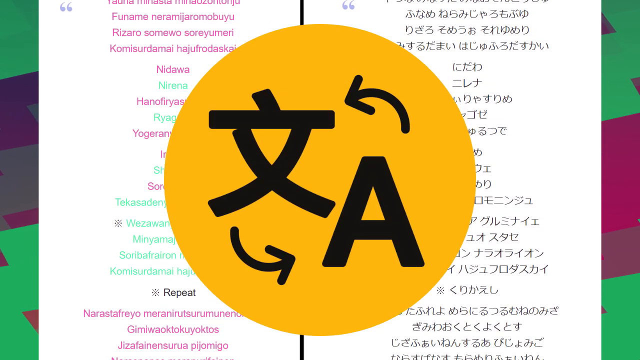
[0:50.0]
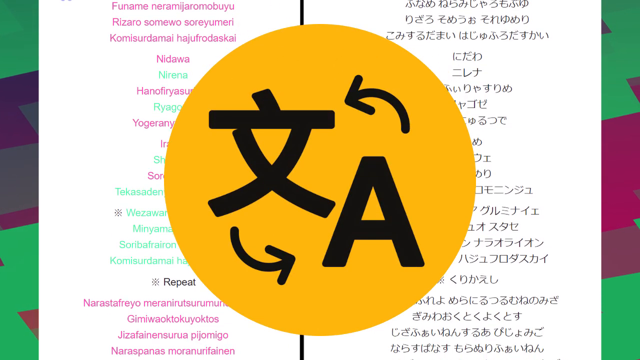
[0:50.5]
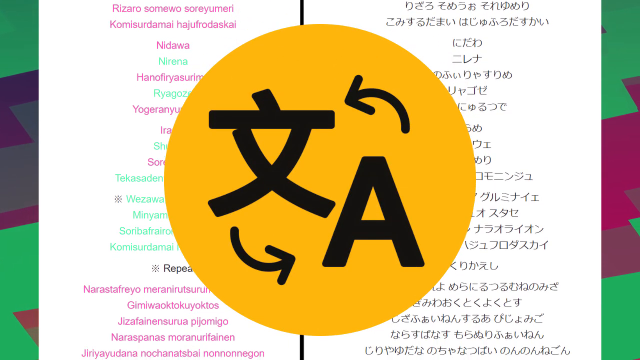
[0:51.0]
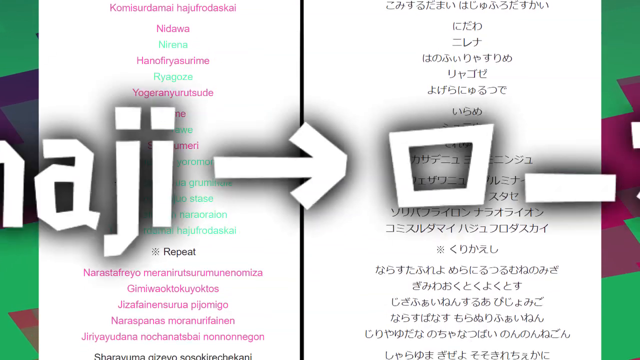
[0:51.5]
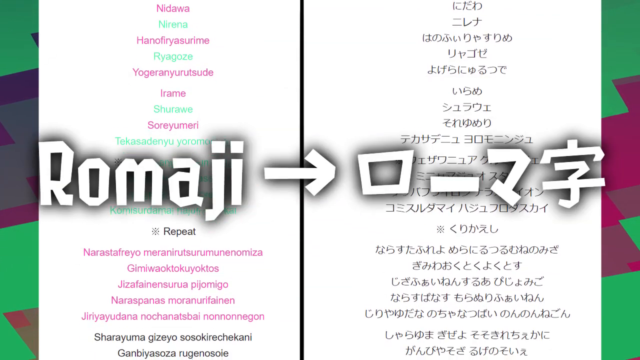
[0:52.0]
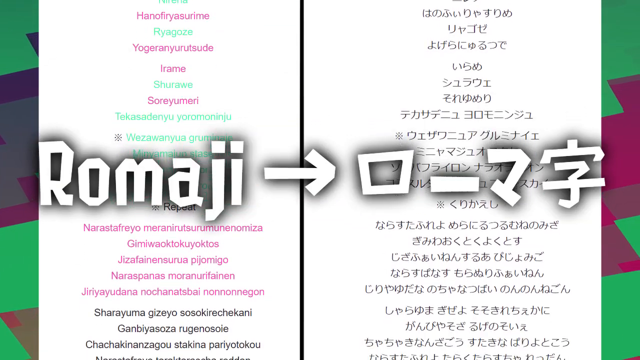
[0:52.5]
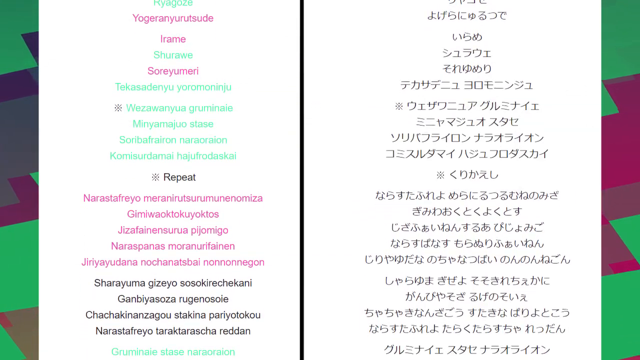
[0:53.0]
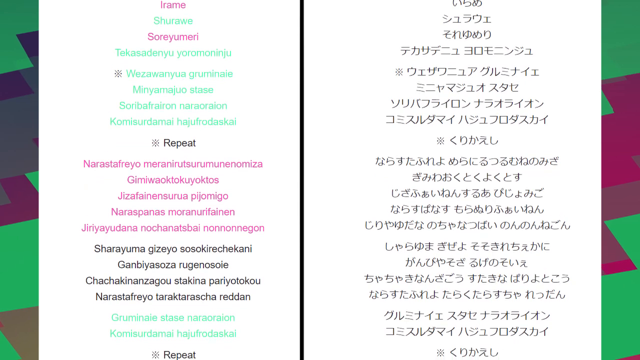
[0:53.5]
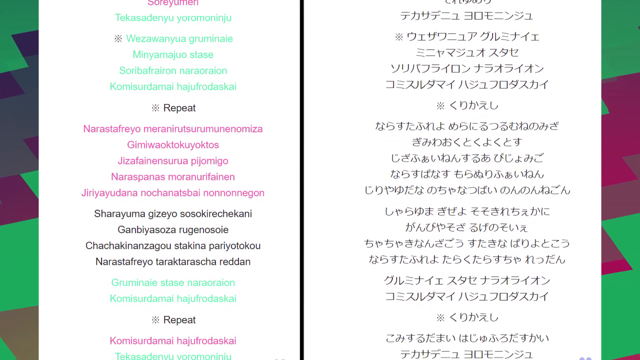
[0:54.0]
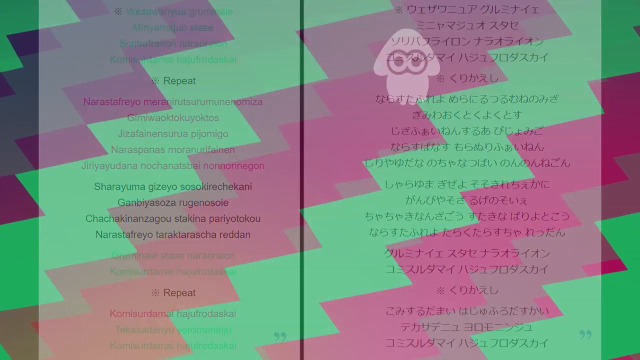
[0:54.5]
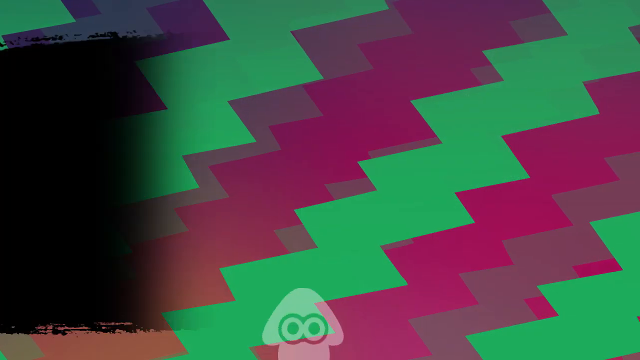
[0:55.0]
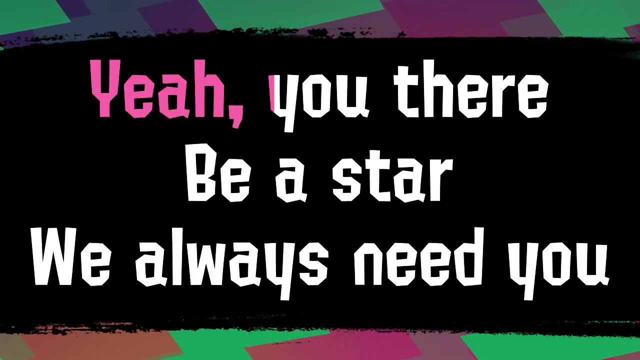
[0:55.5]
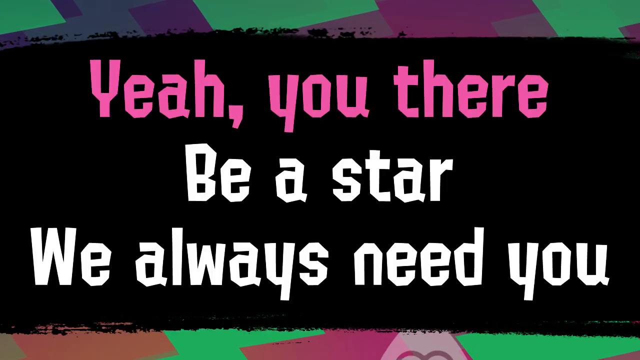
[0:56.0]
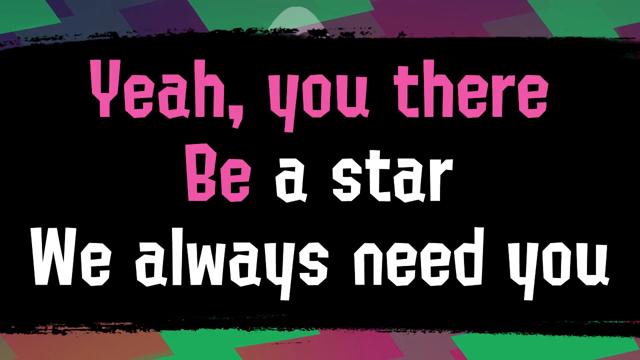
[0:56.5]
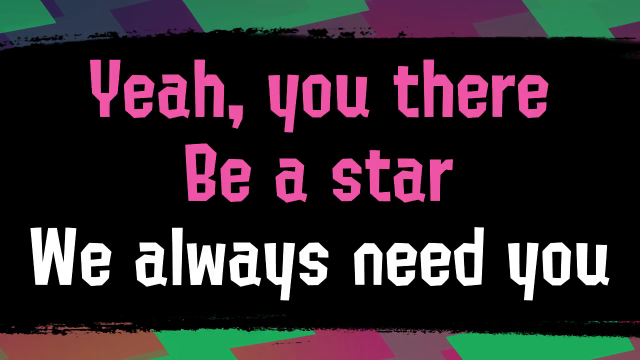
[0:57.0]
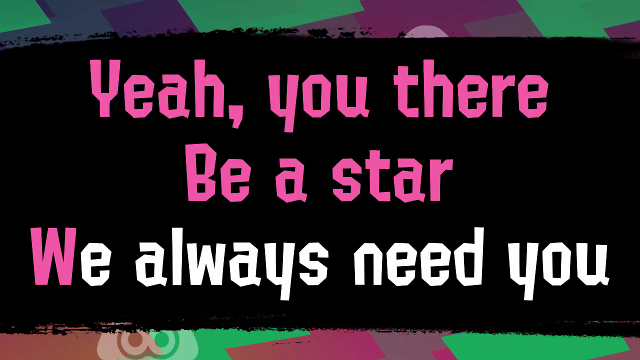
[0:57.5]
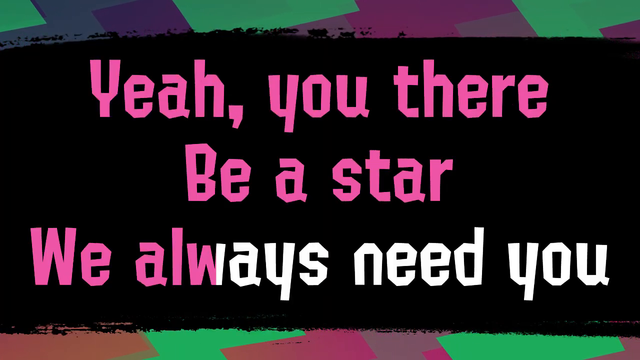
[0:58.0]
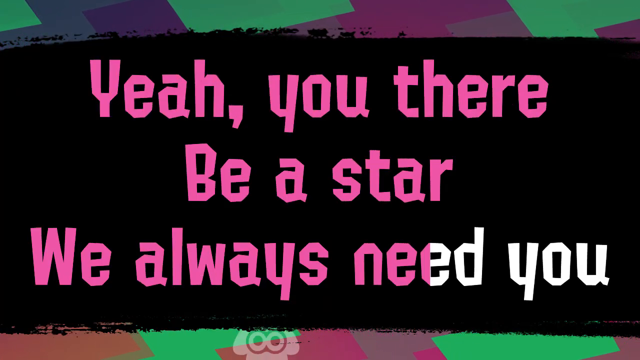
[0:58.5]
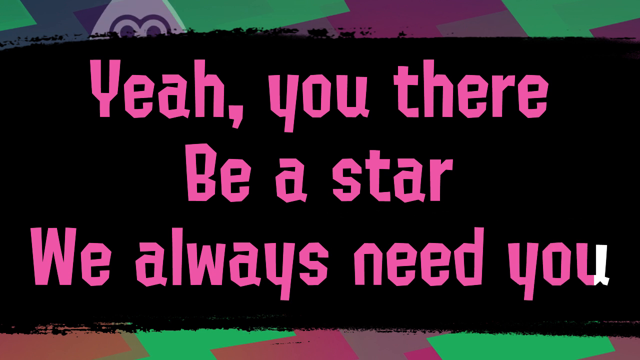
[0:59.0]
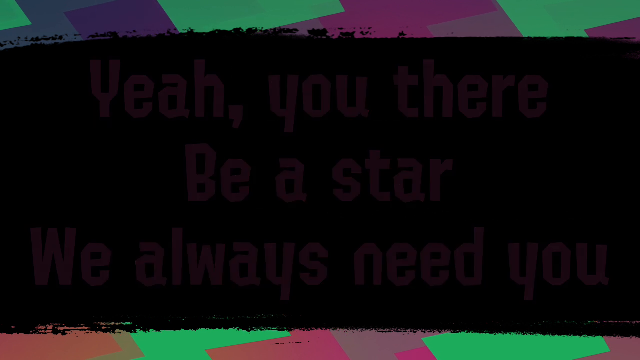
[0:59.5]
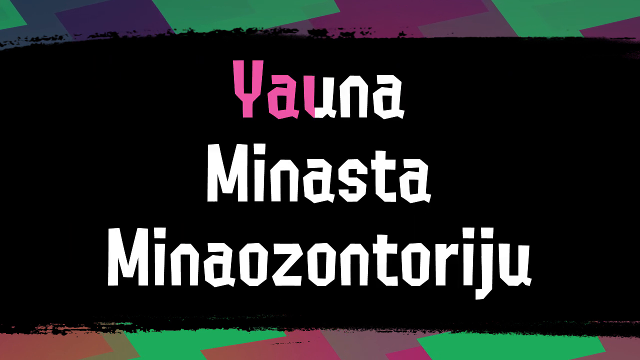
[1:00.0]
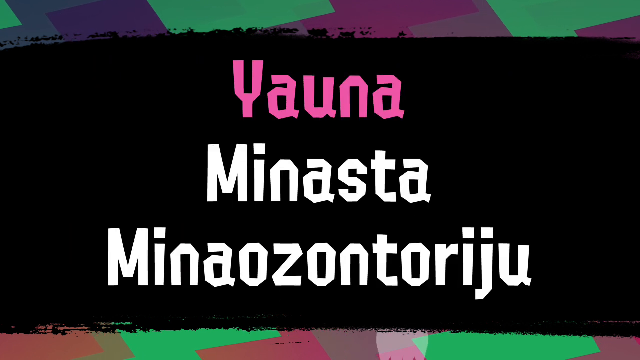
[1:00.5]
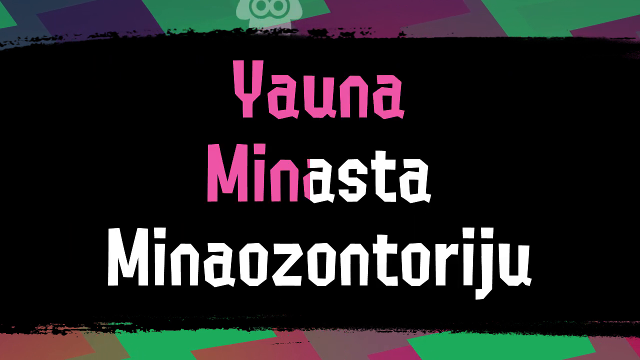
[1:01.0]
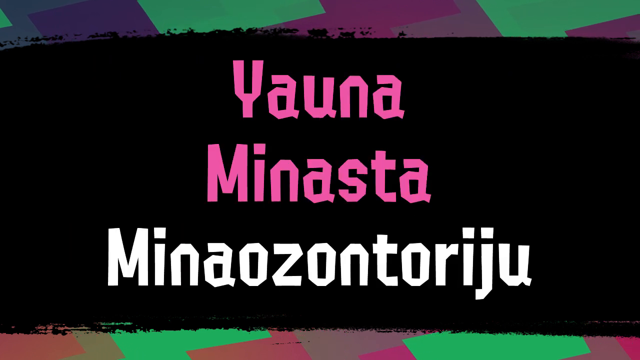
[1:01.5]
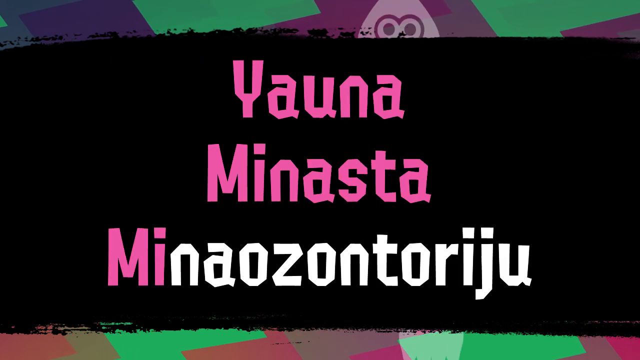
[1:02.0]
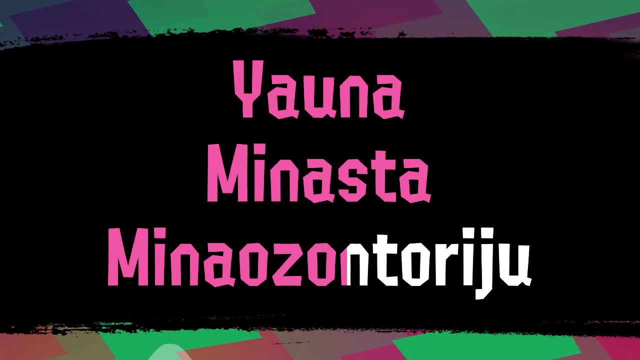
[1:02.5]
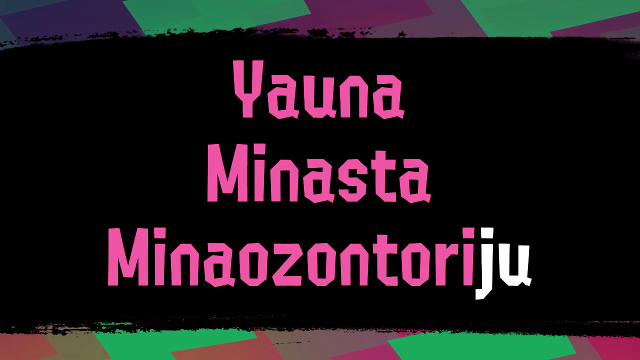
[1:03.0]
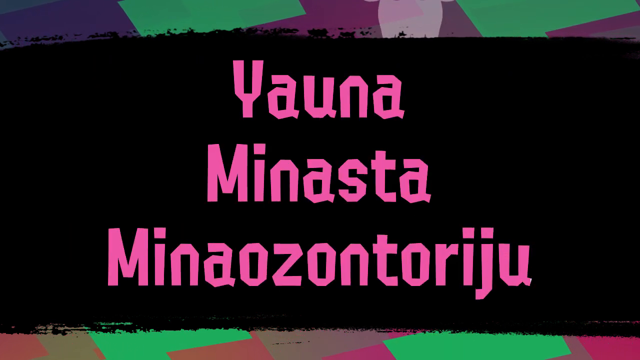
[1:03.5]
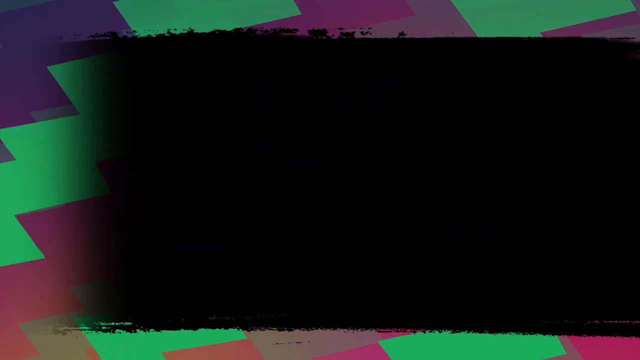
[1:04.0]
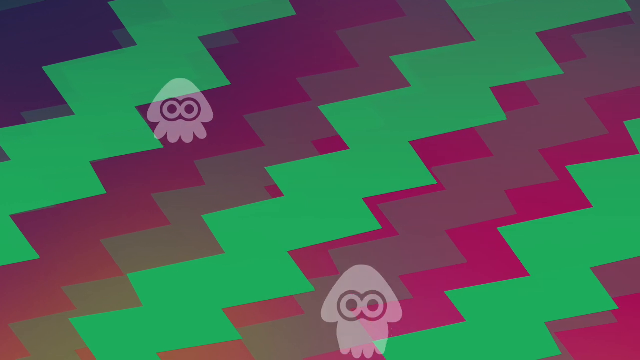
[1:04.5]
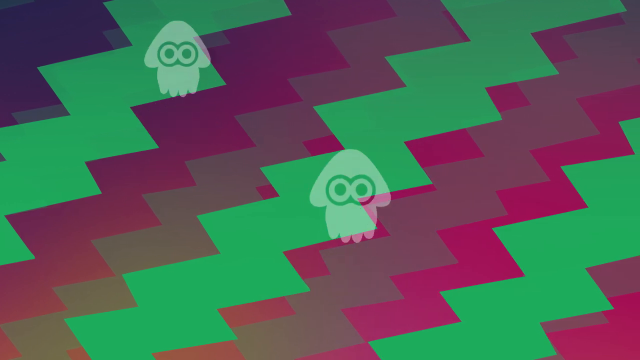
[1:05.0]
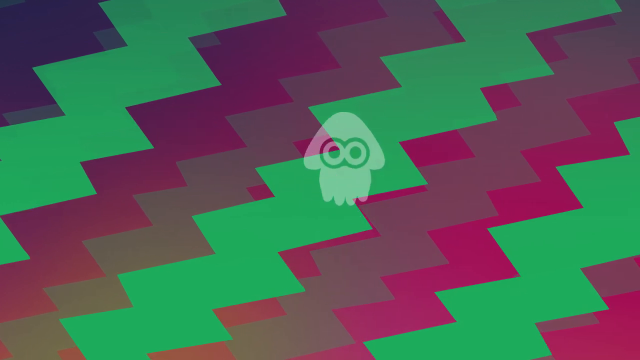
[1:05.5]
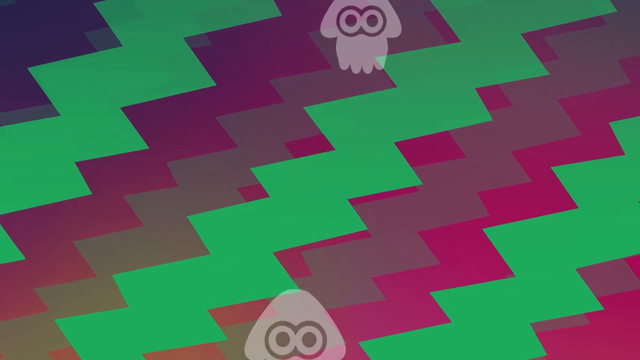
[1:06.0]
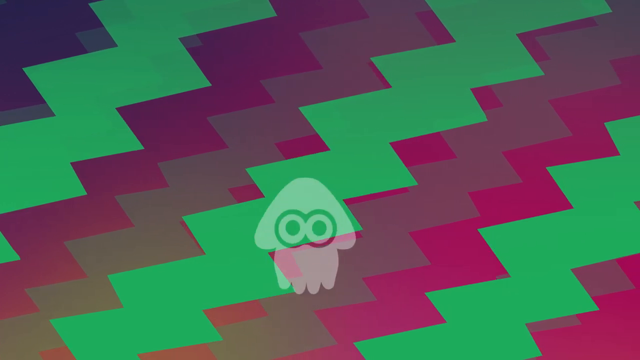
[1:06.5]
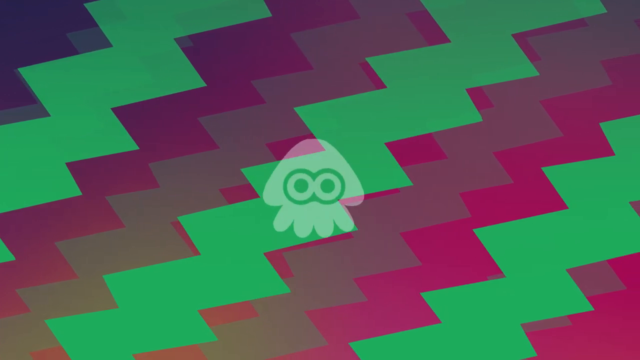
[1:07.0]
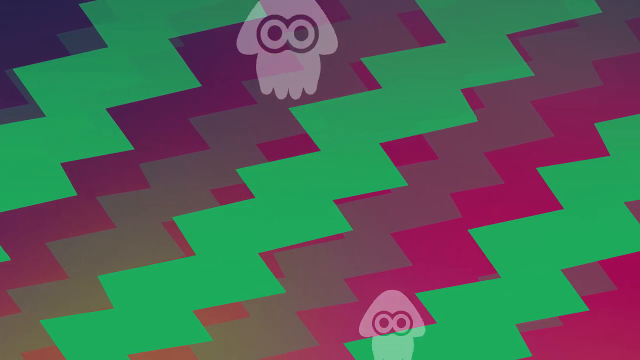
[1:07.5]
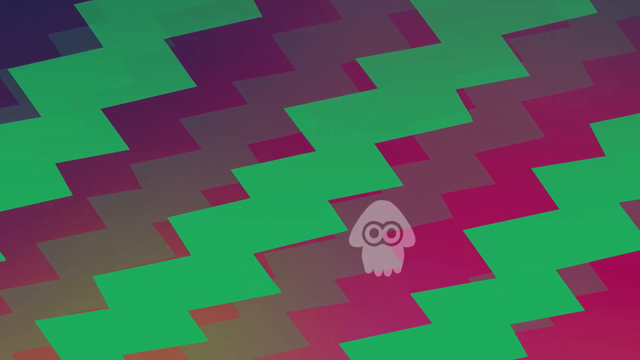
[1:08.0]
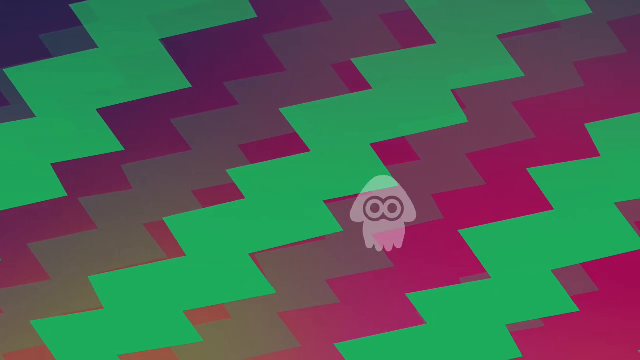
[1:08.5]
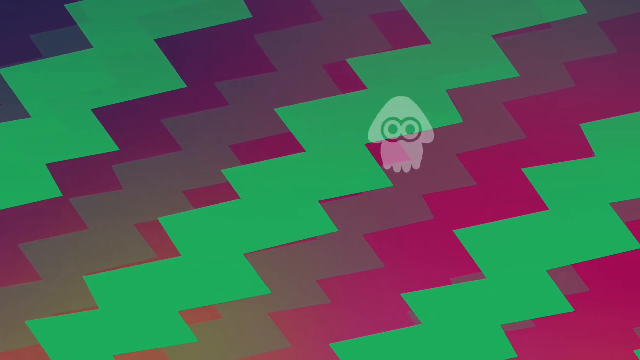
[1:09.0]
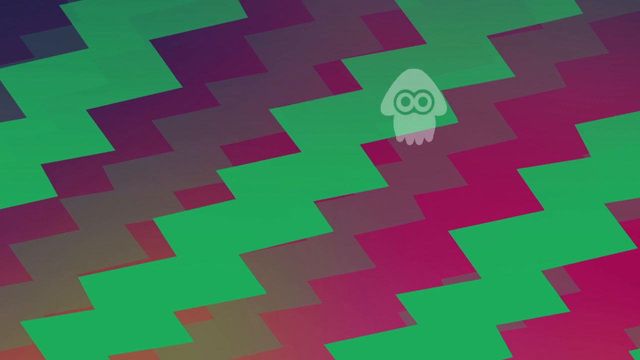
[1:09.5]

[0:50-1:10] A website shows a lot of Japanese text along with some English text. Japanese-written information is on the right side, and English-written functions are on the left side. The words are very small and hard to read.